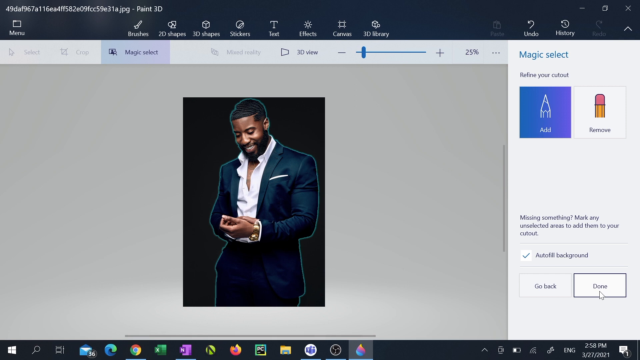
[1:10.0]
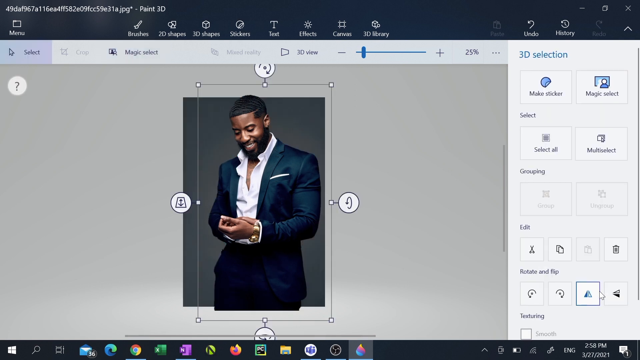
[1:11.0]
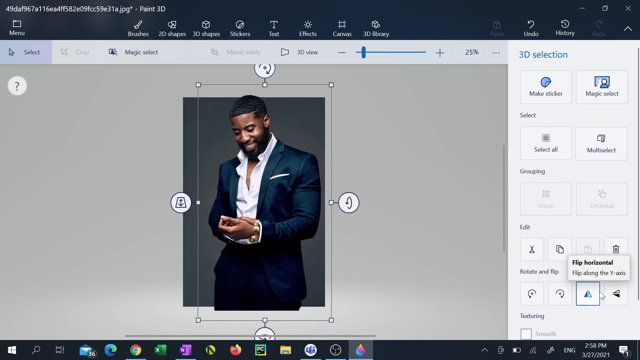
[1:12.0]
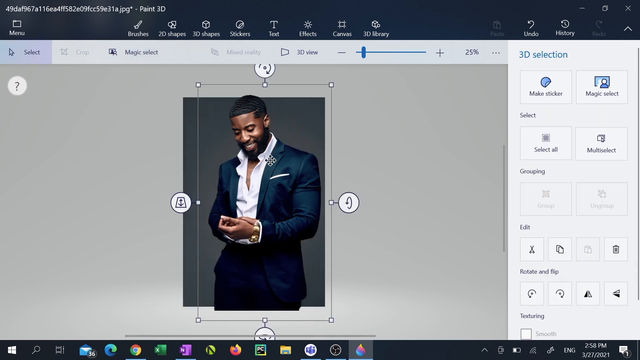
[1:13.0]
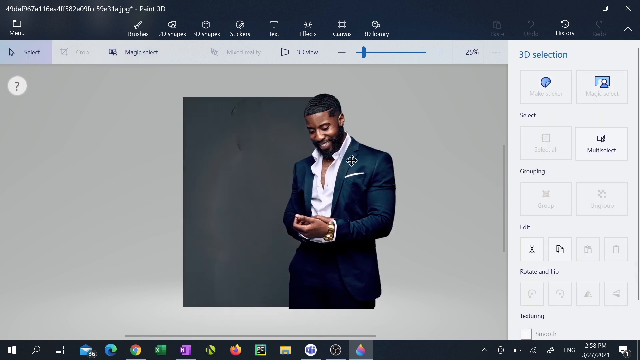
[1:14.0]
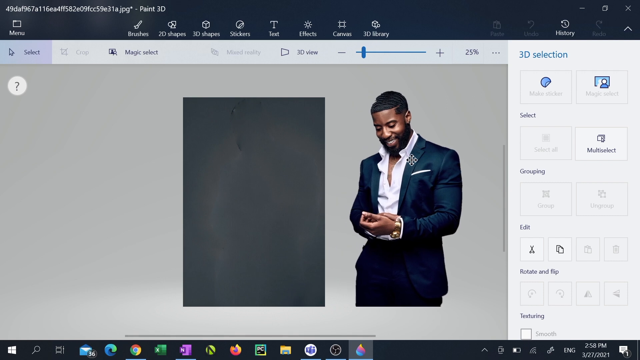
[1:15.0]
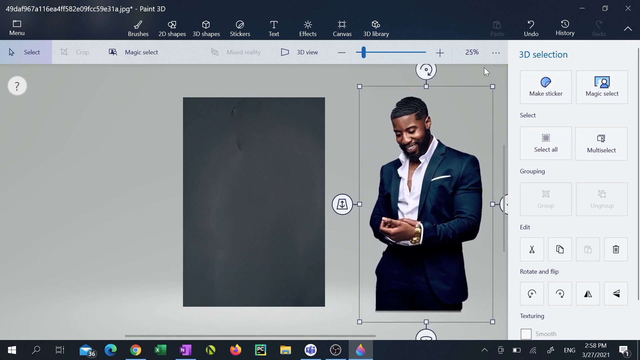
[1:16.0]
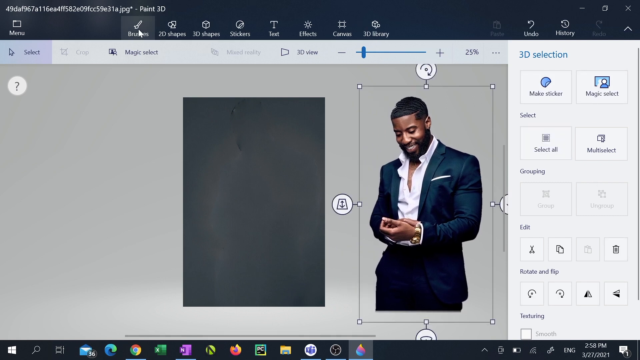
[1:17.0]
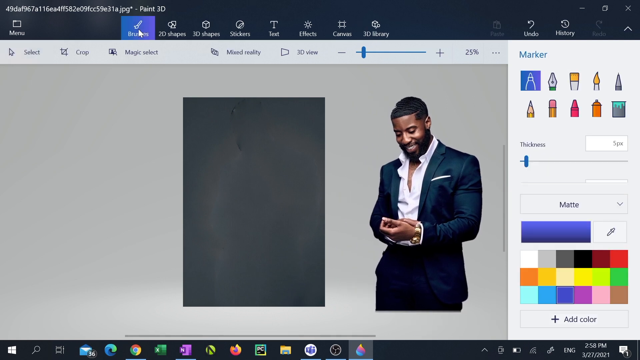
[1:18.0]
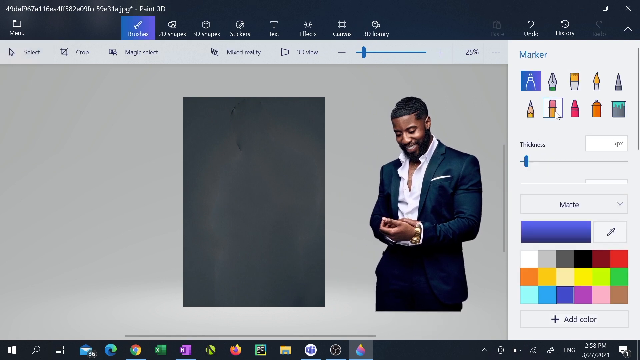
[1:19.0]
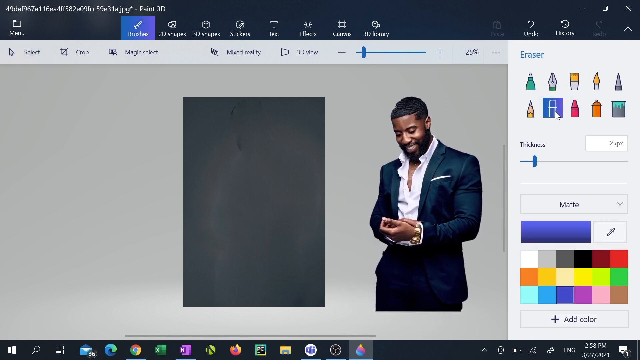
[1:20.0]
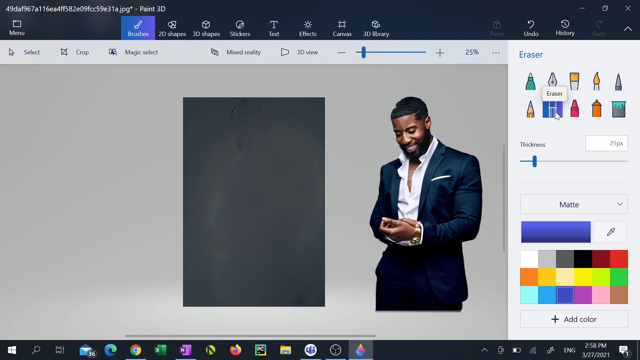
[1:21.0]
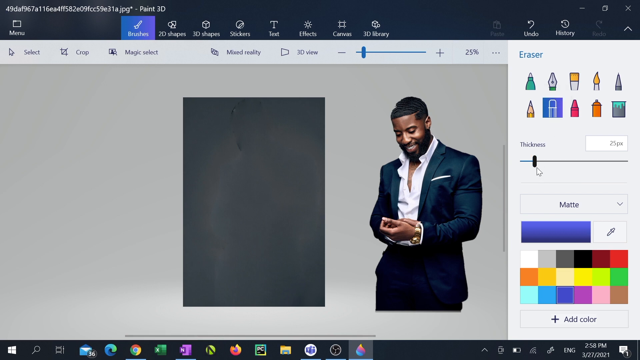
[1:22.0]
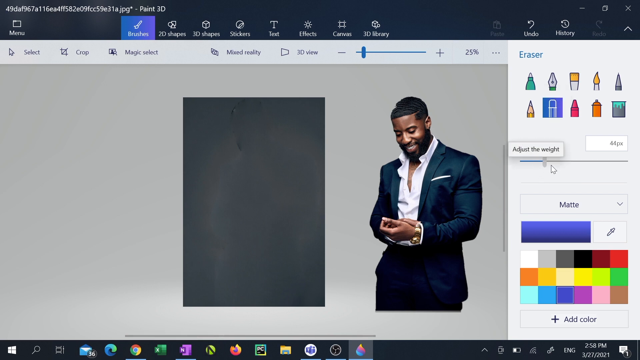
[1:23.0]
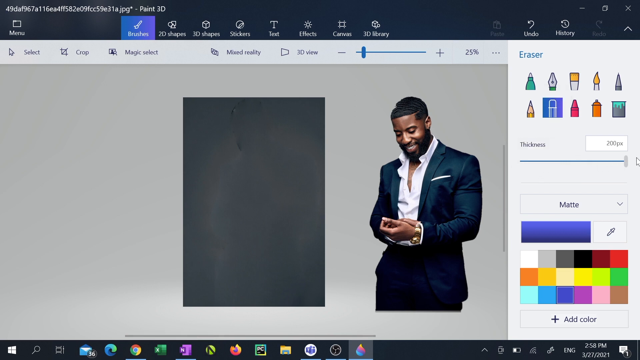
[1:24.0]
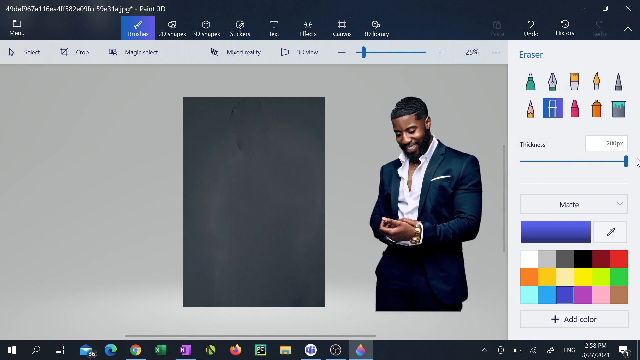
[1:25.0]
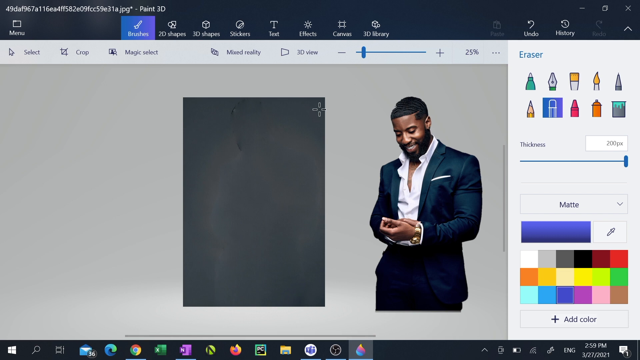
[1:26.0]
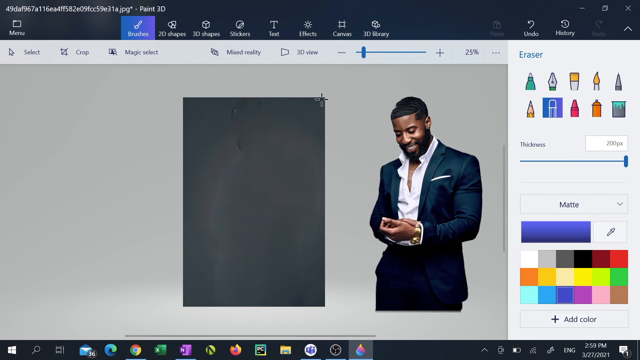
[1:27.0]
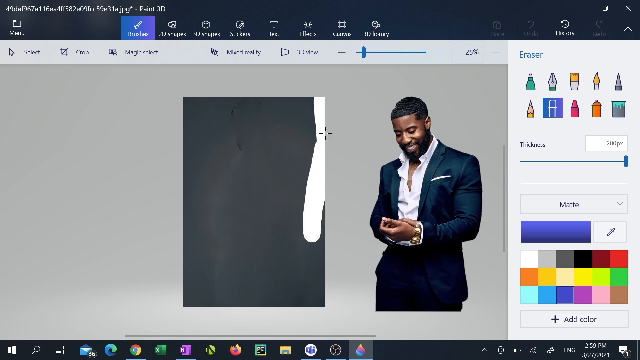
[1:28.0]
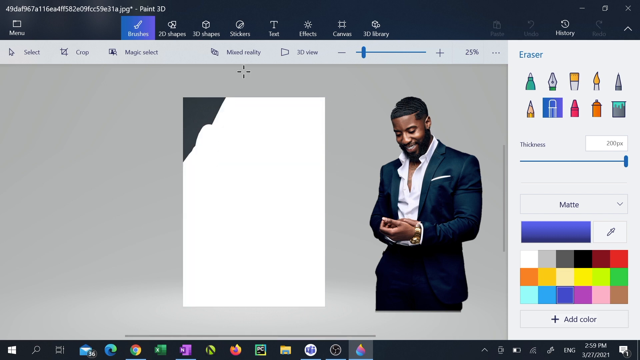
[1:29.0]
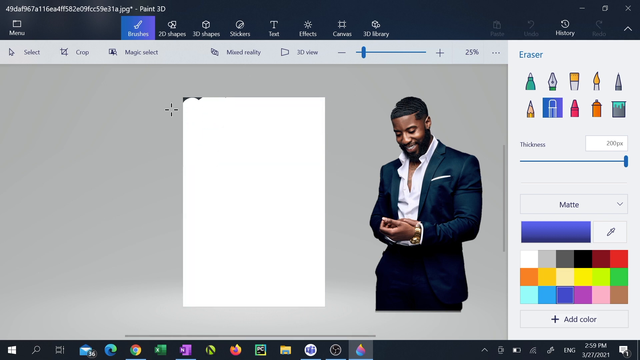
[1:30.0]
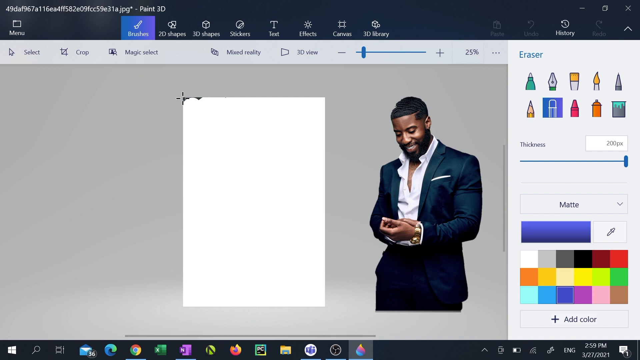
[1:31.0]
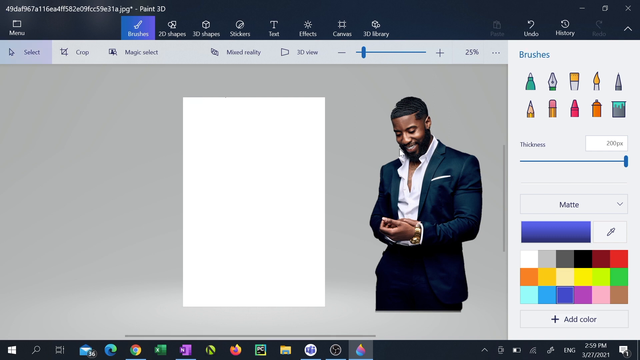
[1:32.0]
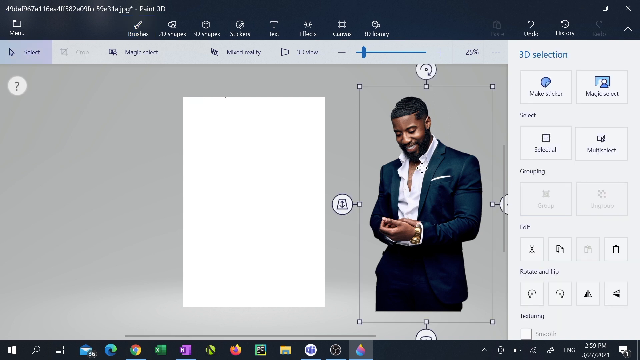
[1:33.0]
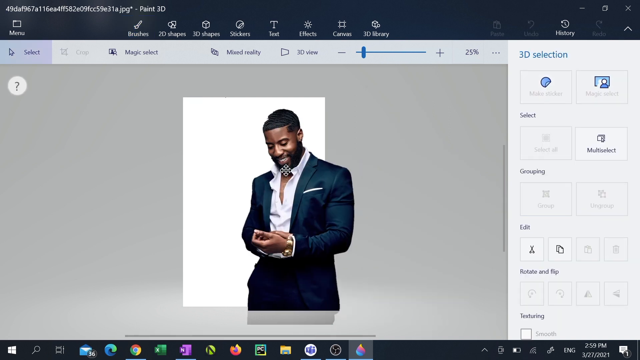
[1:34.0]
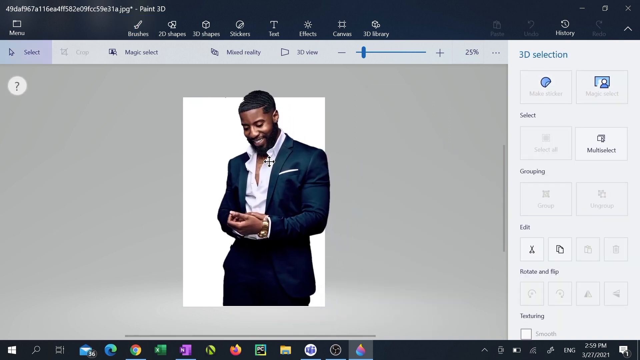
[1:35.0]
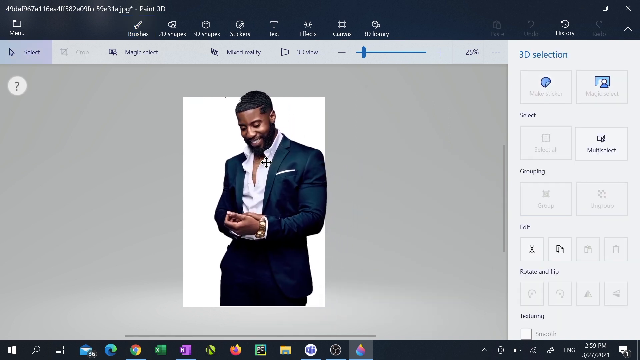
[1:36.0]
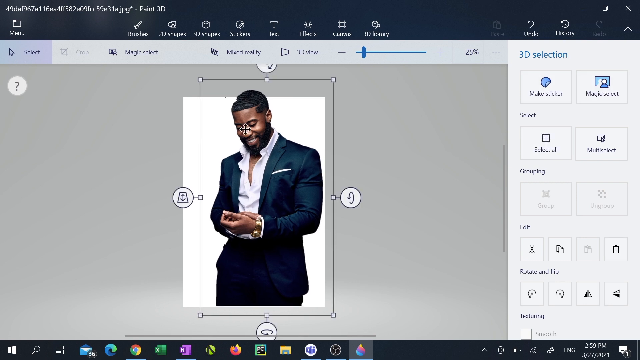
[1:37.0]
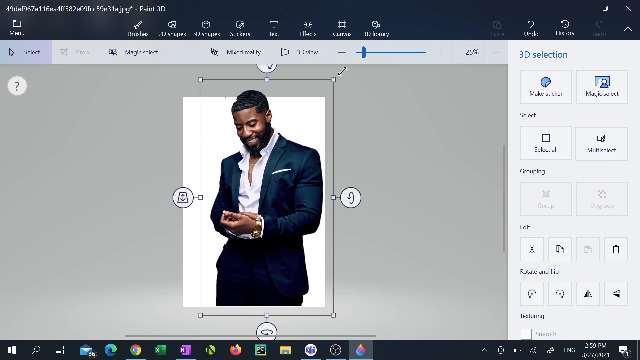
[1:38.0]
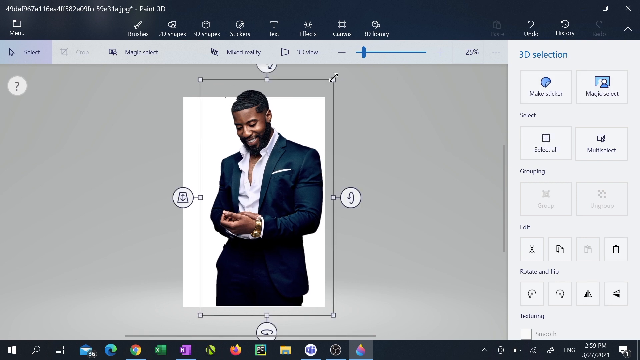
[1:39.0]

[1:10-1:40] With the magic selection done, the man in the image has popped out from his background and can be moved separately. The user clicks on the left side of the man's chest and drags him to the right, separating him from the background; he is now a complete cutout with a transparent background. The user then selects an eraser, increases the thickness to the maximum of 200, and erases the background the man was previously on, changing it from a dark navy/black colour to white. The user then clicks on the man's chest, drags him from the right side of the screen to the left, and lays him over the erased background.